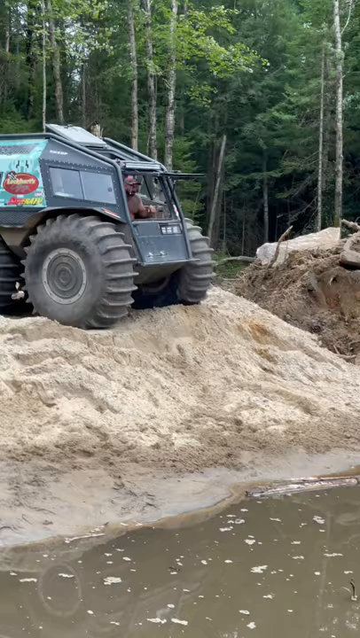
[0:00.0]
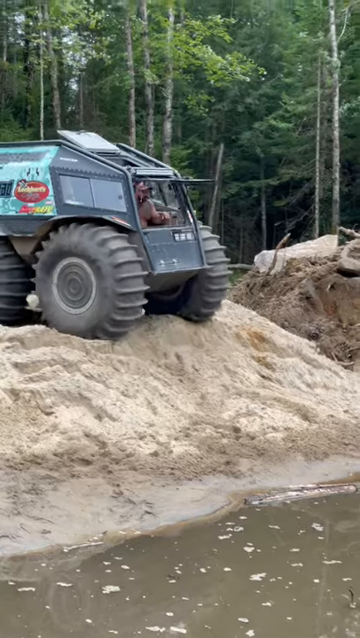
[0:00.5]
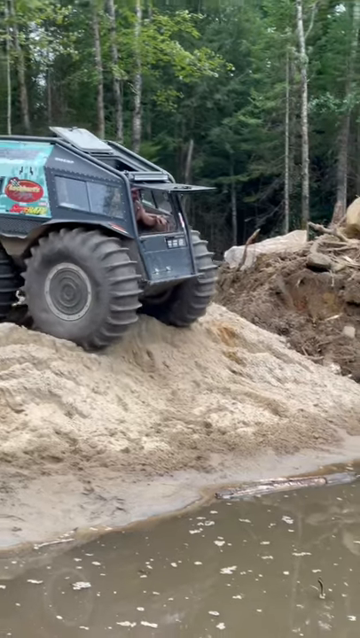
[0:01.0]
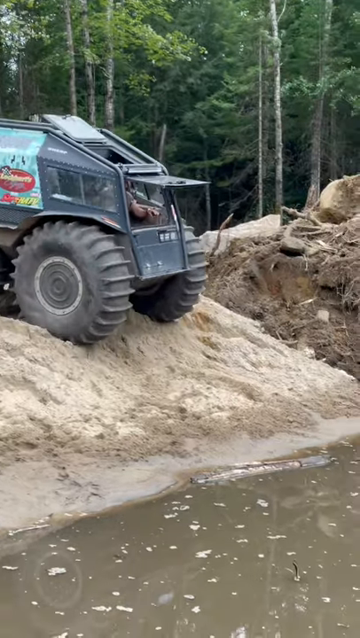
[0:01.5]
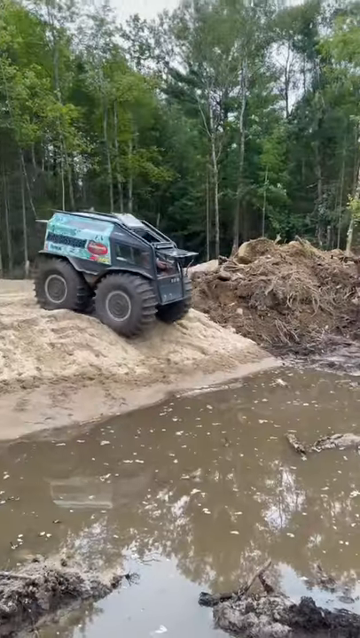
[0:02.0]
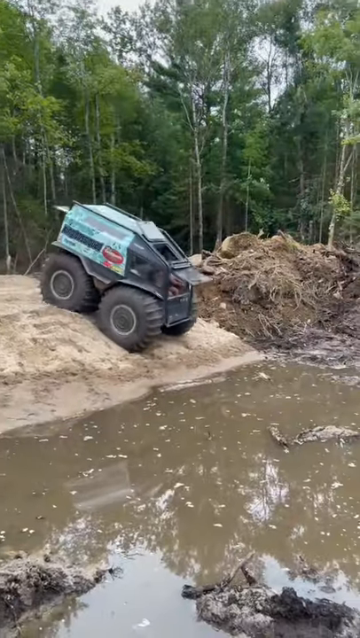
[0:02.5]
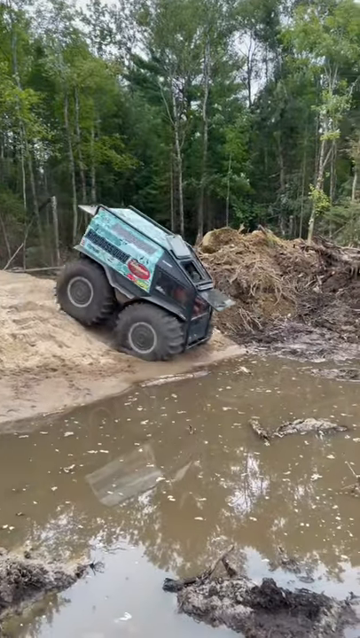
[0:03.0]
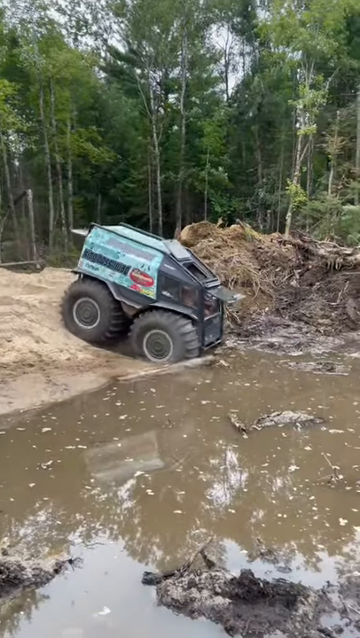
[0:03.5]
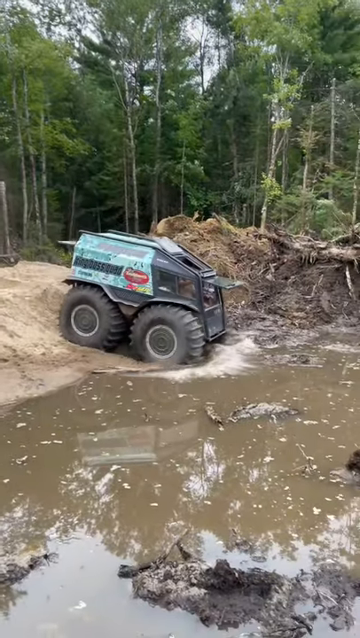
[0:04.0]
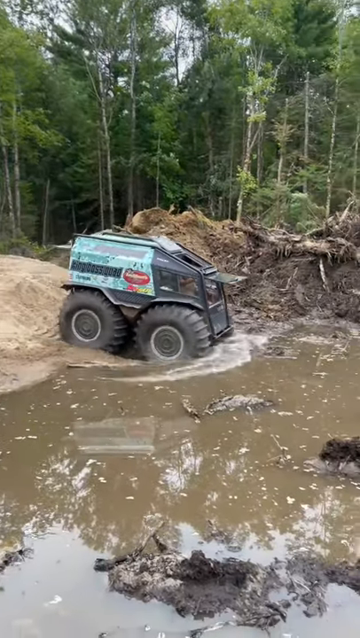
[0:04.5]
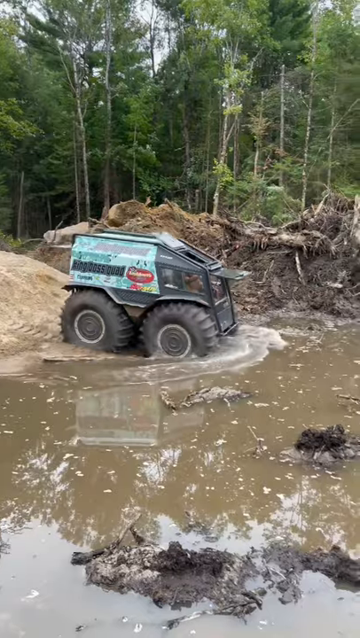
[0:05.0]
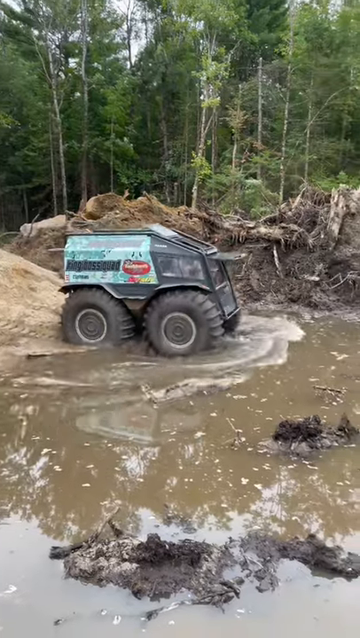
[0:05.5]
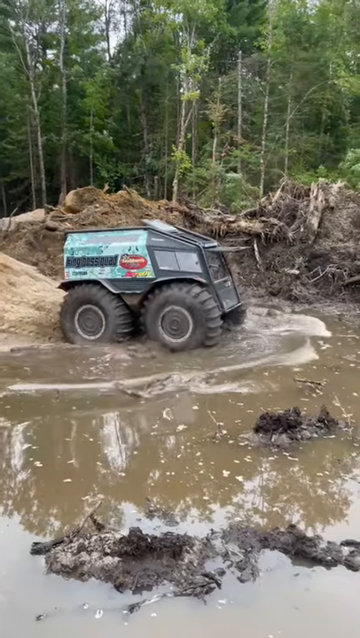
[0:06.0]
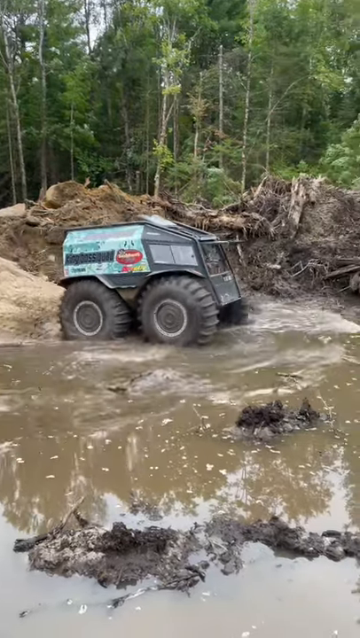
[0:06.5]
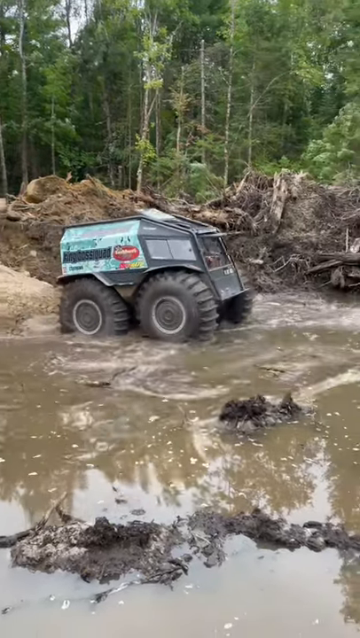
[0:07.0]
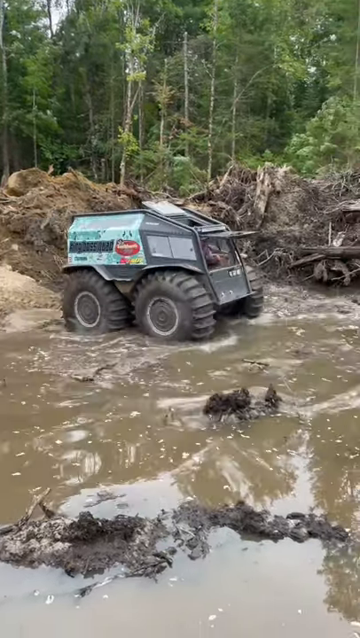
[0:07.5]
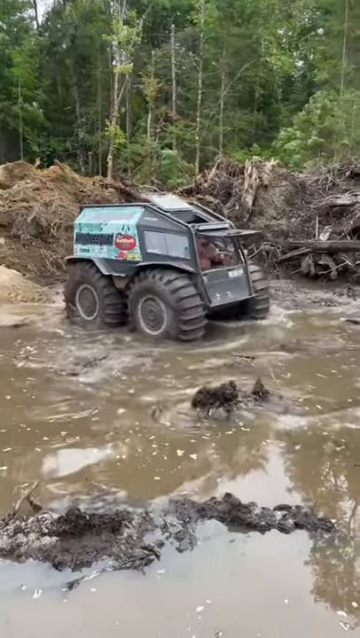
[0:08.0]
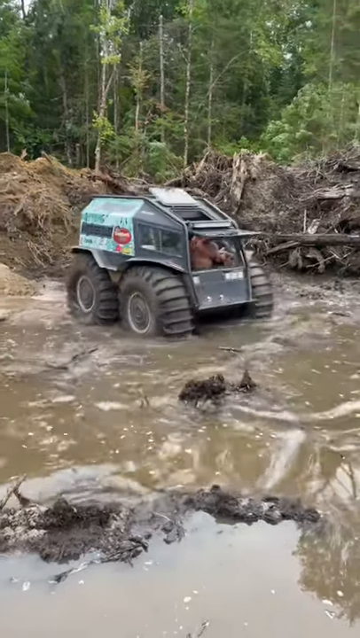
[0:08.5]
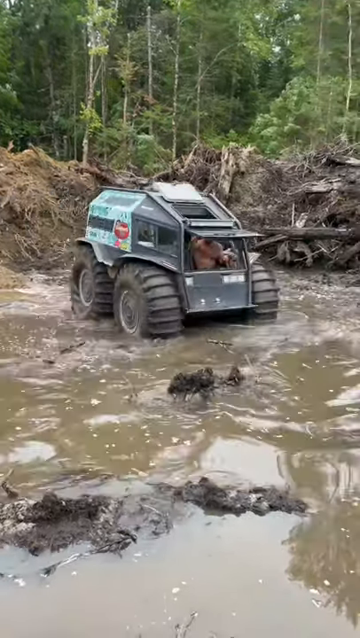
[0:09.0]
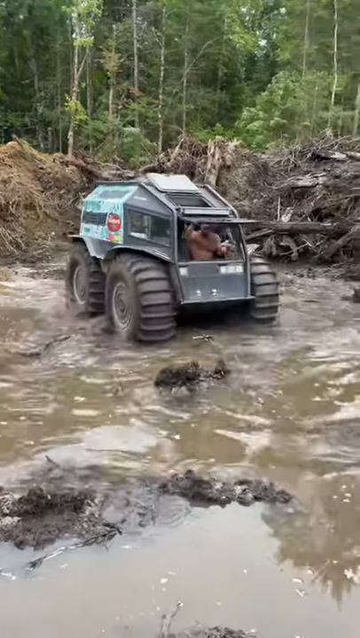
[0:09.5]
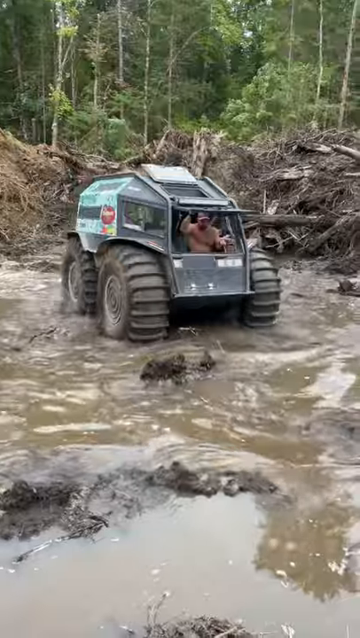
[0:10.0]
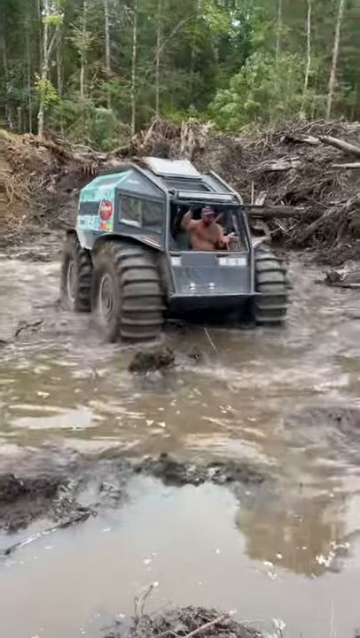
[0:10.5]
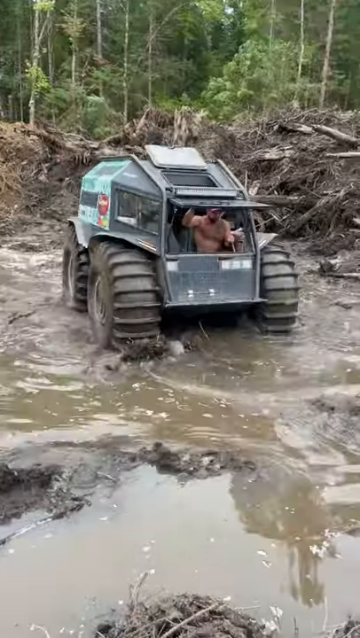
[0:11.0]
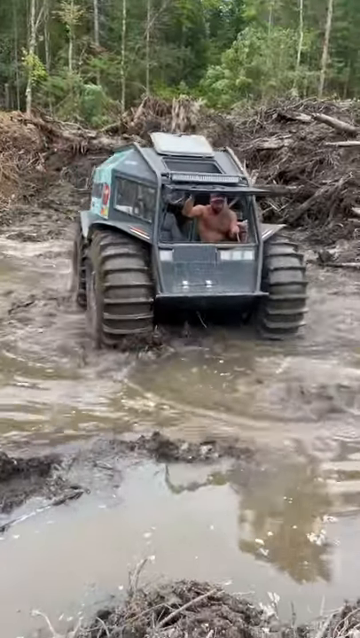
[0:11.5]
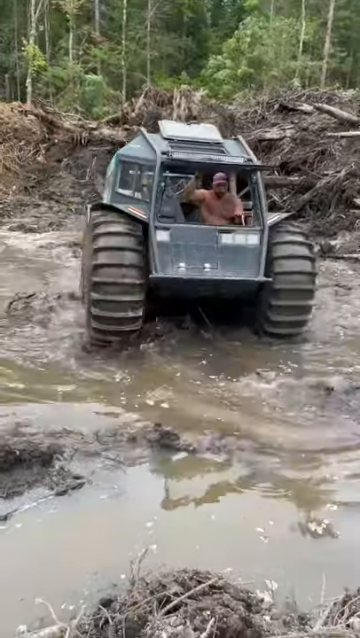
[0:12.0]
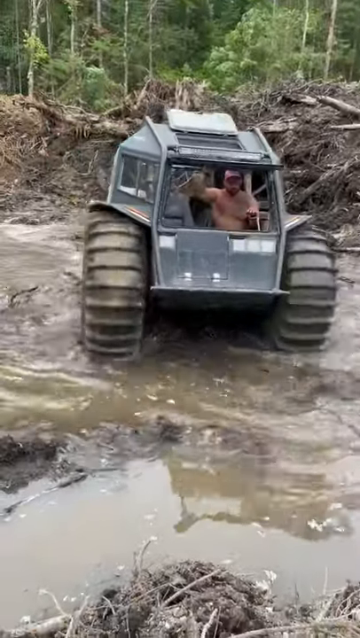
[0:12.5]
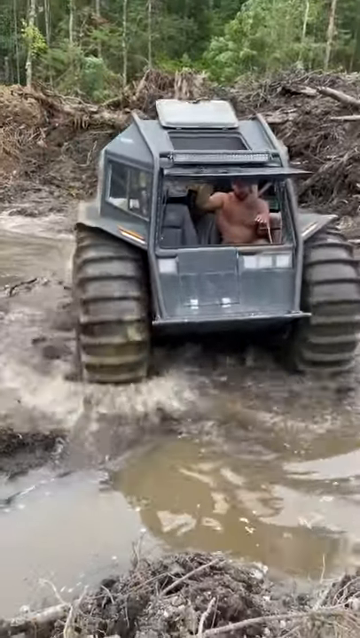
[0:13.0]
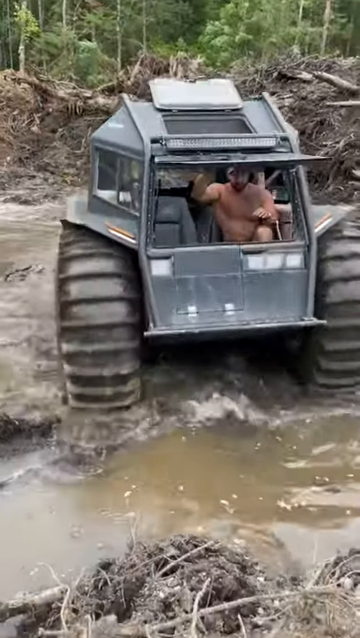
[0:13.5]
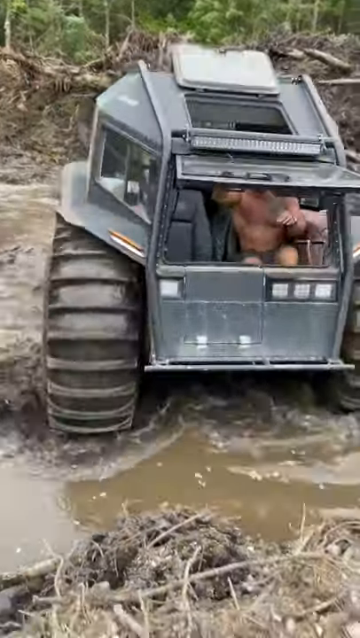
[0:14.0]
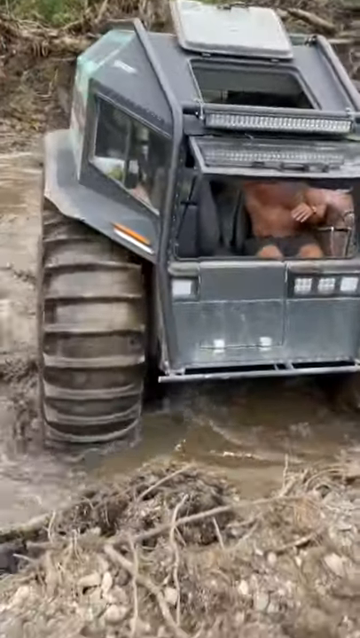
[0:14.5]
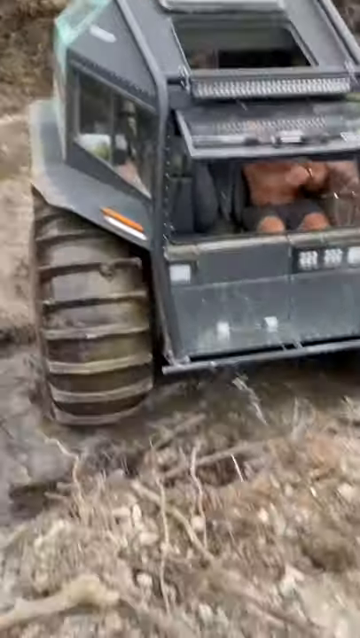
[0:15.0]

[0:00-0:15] A large four-wheel vehicle with very large tires goes down a very steep, short hill of dirt and enters a creek, then drives through the water. One person with their shirt off is driving it. The type of vehicle is unclear; it is not like a typical car, having tires like those of a large four-wheeler. It has four wheels and is open in the front, and it looks like something someone may have made. In the background there are trees and a large pile of dirt, debris and tree limbs. The creek is probably not a natural one; it looks like a hole dug in the ground holding either rainwater or water placed there. The vehicle seems to be just driving around in the hole of water for fun.